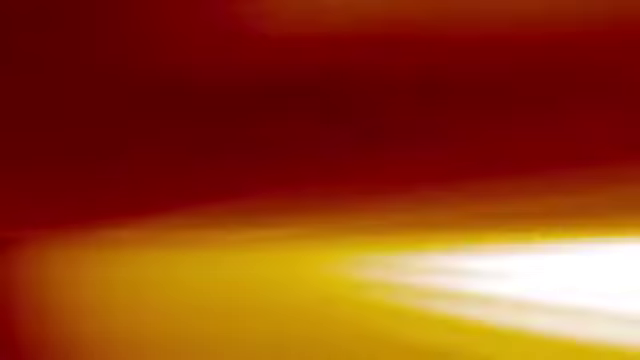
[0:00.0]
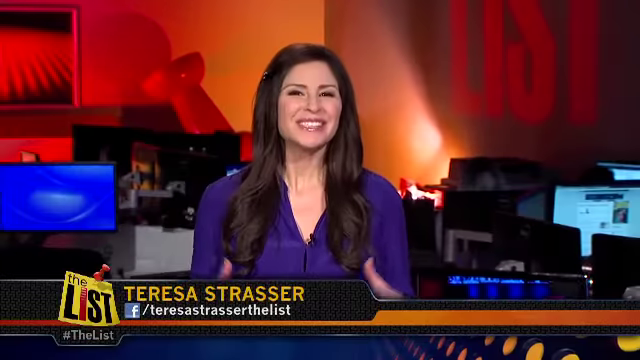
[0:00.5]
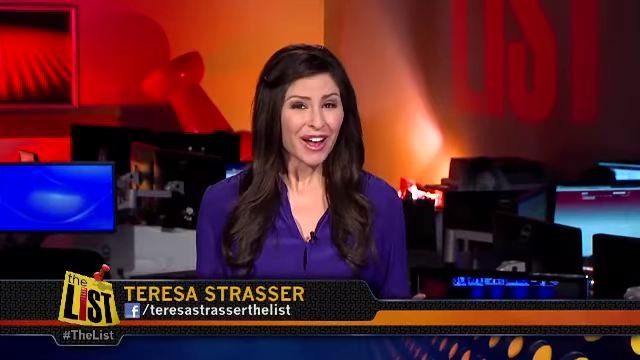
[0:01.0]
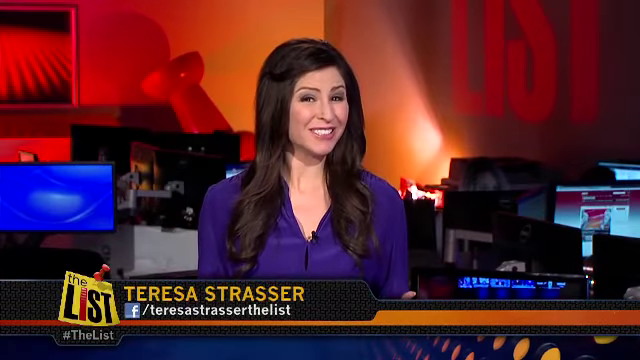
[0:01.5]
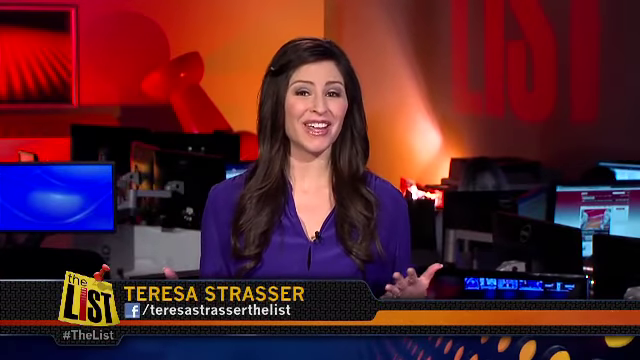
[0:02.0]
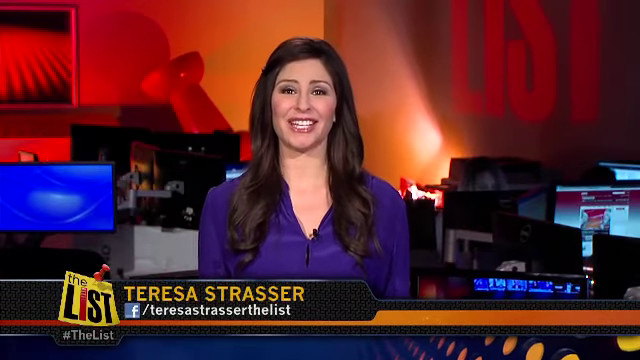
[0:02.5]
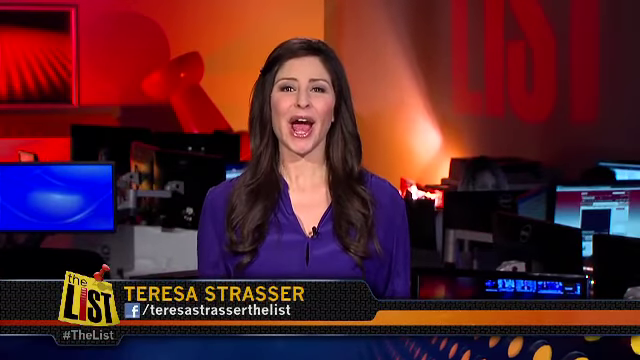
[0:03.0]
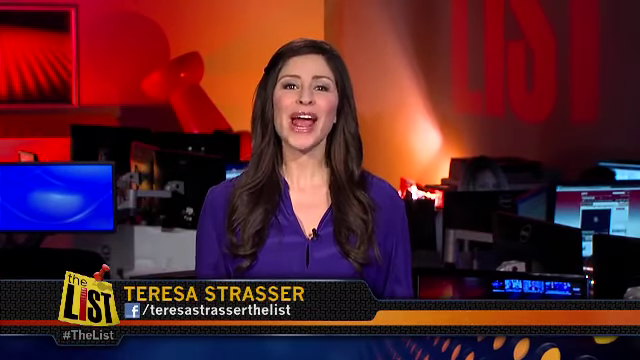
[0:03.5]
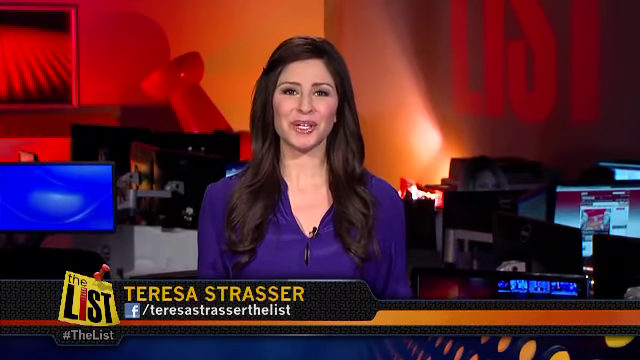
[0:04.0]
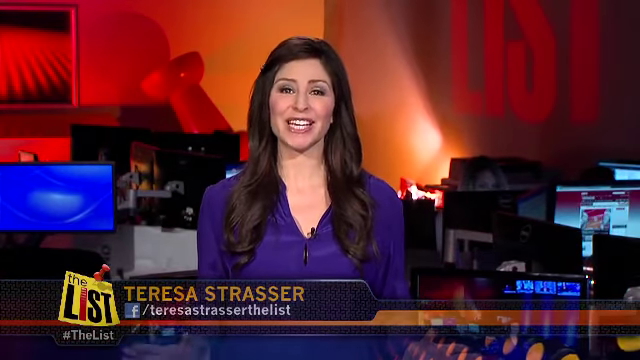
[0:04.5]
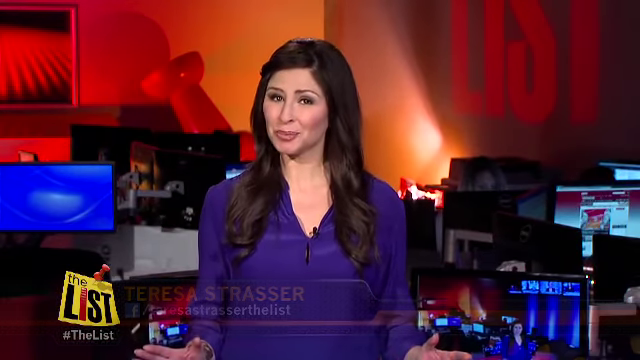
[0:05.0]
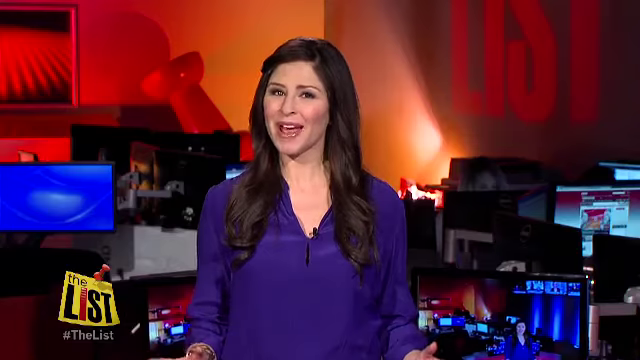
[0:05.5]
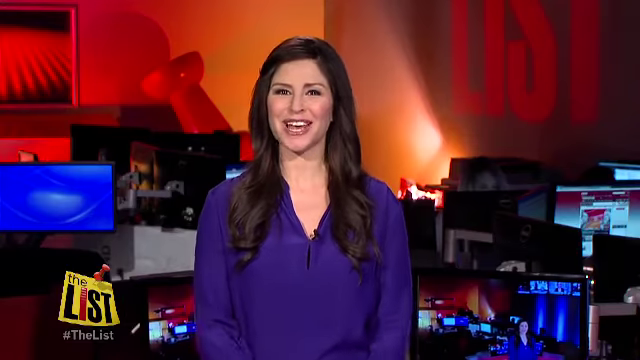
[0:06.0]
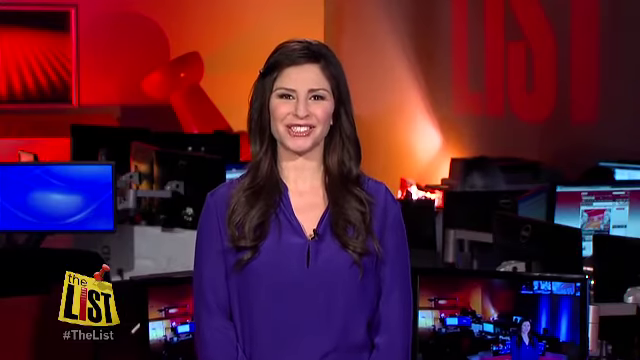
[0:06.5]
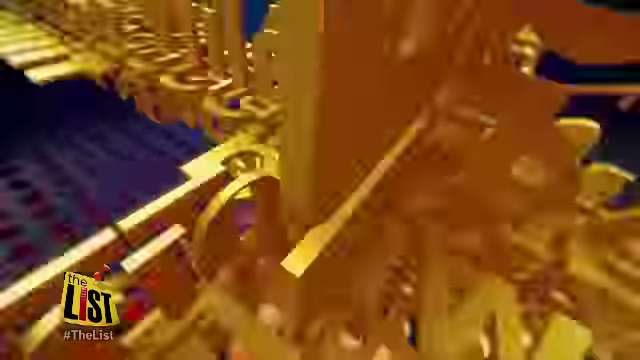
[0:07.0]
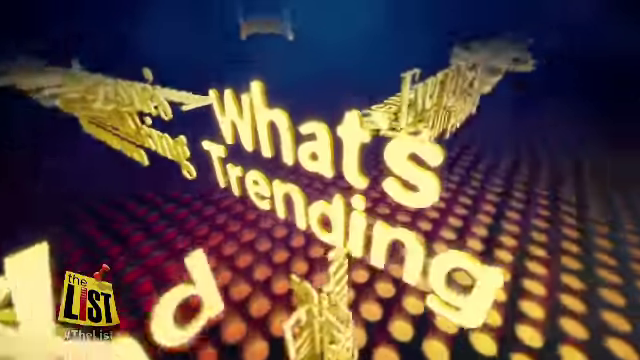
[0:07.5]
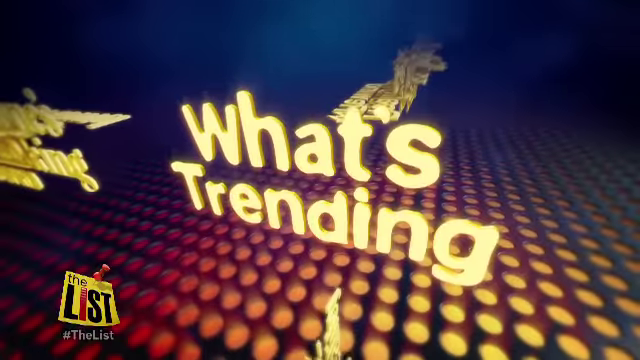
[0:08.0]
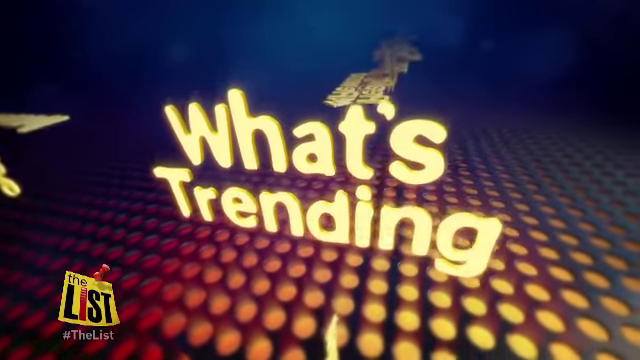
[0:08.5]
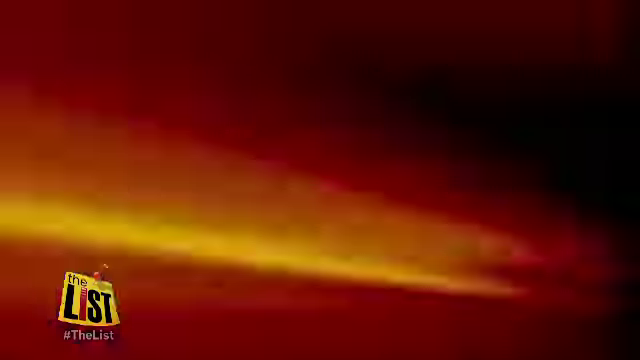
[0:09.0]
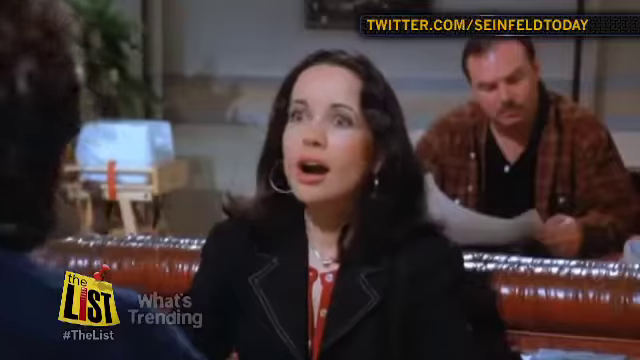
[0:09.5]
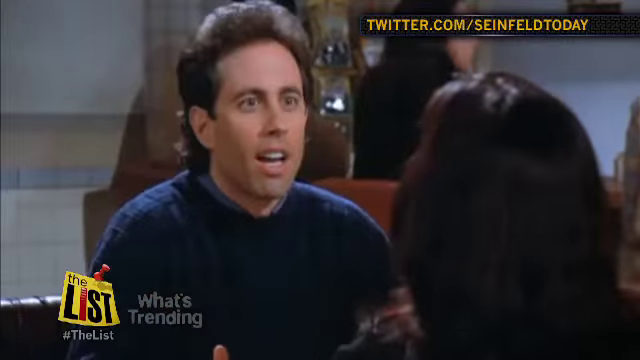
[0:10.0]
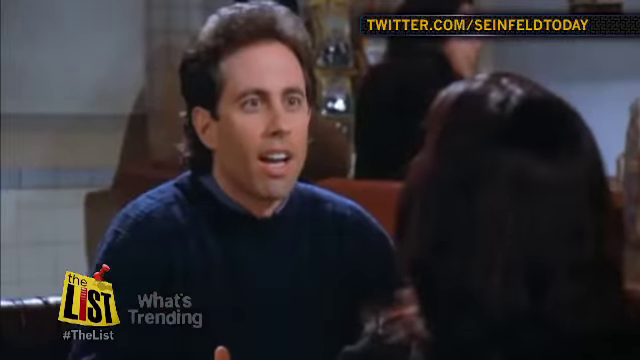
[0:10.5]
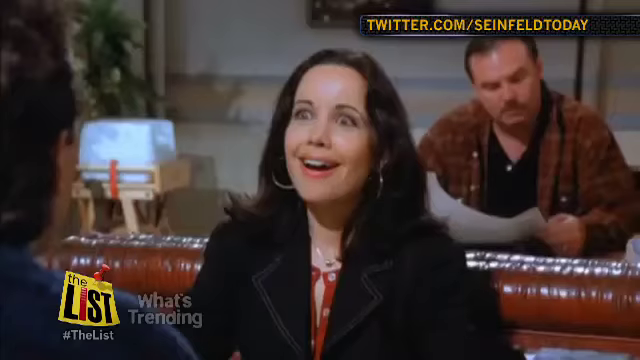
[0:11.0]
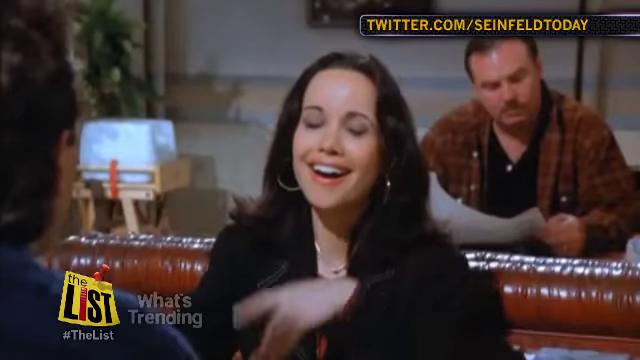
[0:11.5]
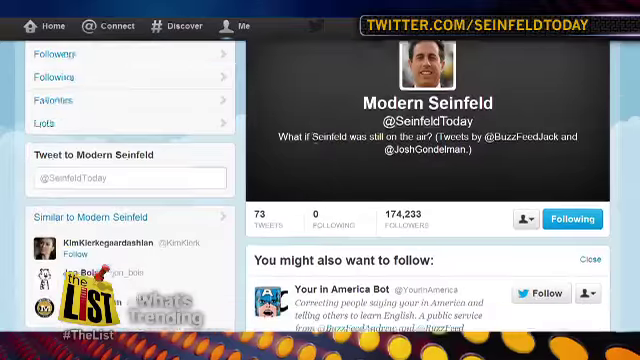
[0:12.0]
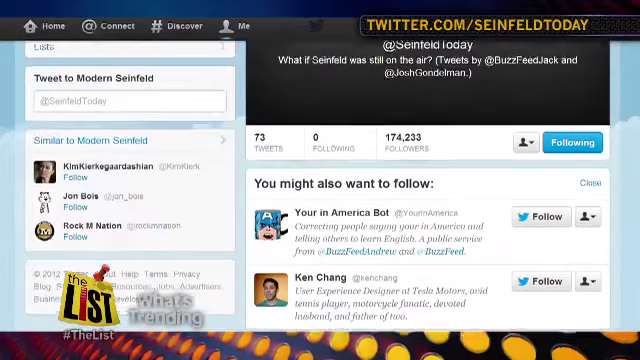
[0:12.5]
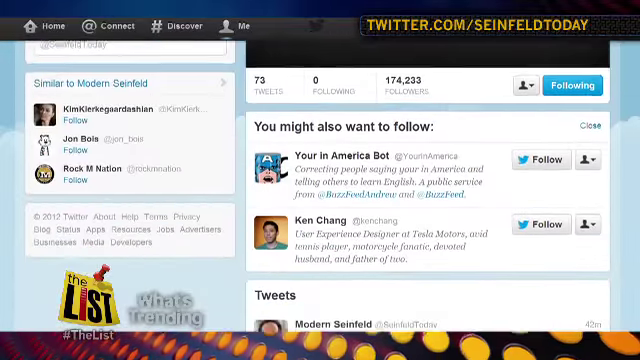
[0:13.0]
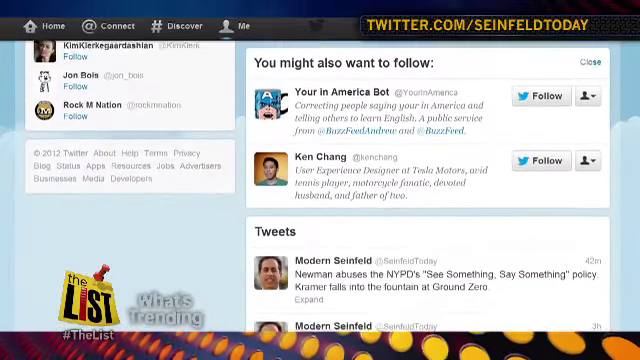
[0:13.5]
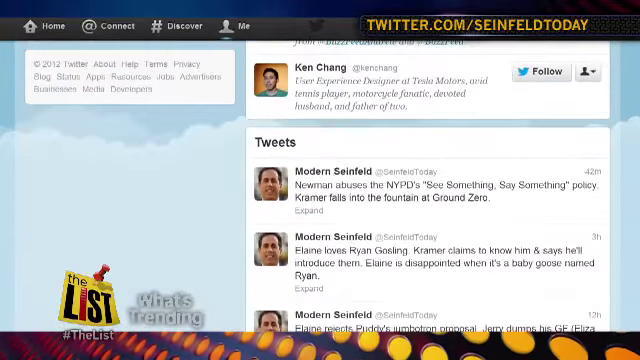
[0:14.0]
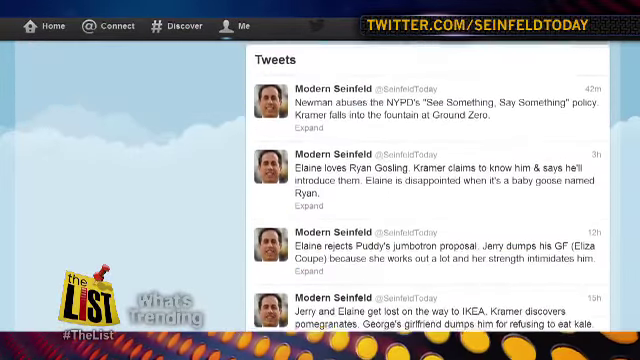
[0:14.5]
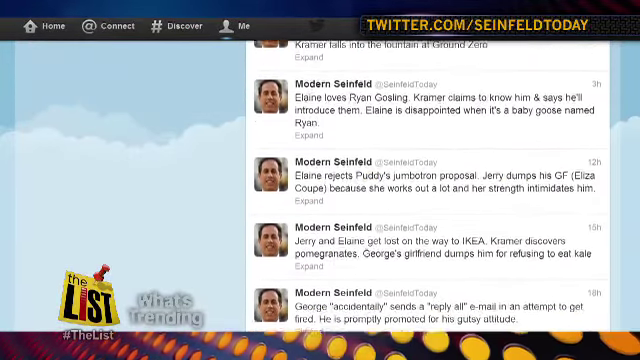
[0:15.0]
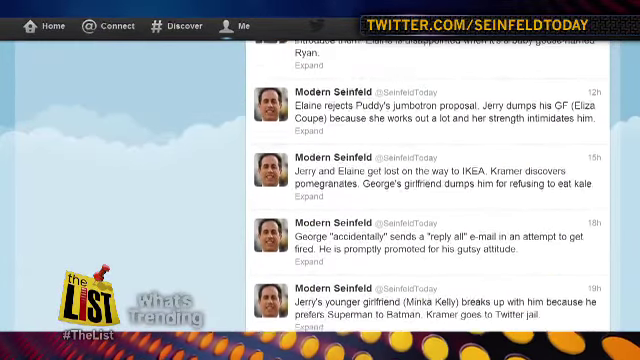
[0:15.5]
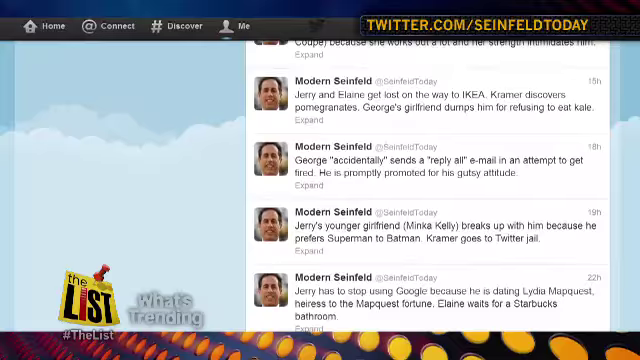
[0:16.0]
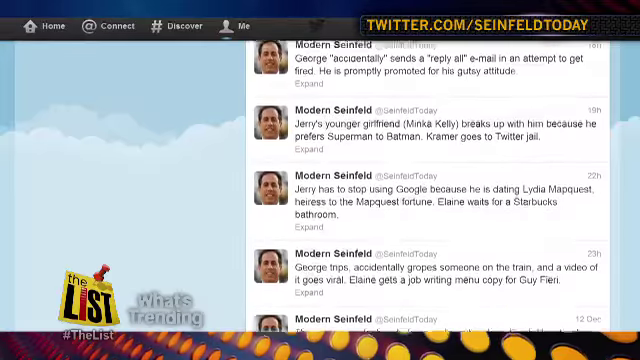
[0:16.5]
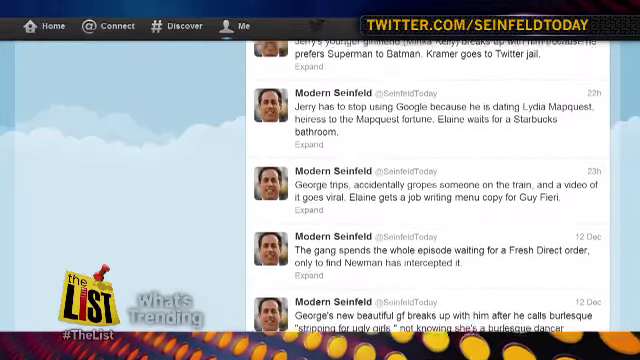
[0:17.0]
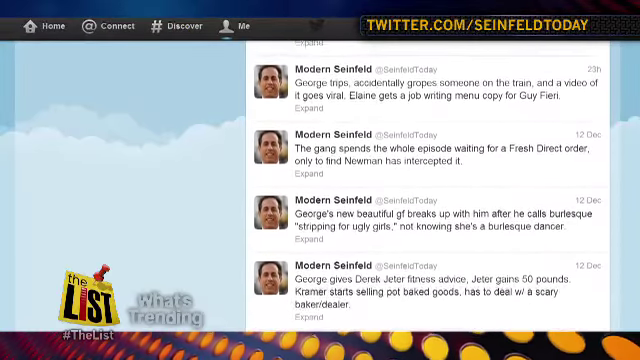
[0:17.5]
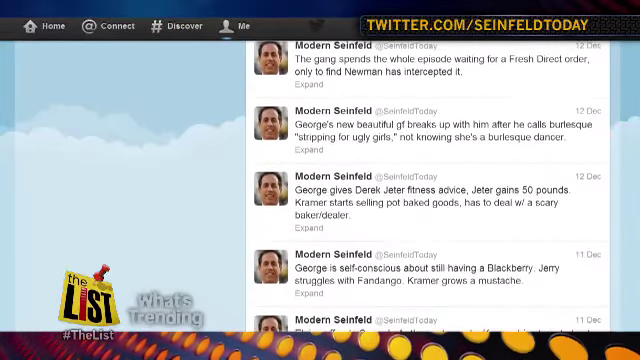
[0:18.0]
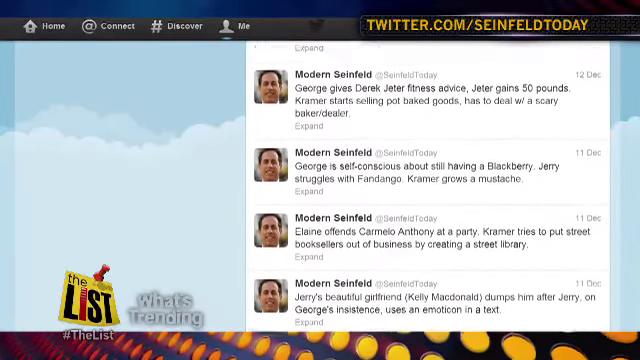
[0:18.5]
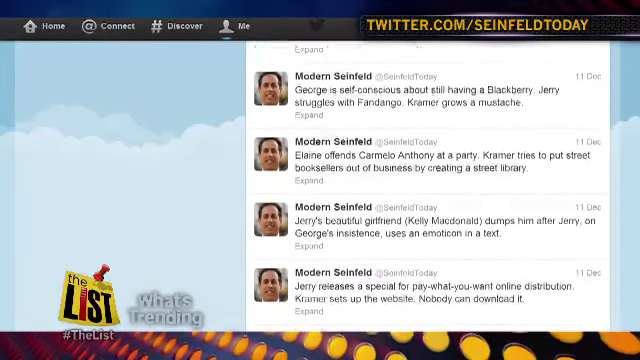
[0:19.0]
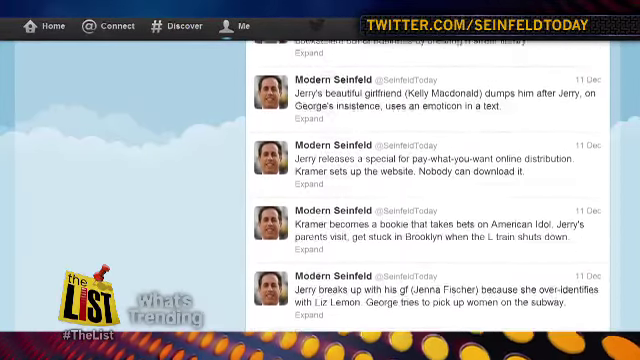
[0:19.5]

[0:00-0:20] A woman is in a studio; behind her is a TV showing a blue screen, and there appear to be many other computers behind her. As she reports, a list is shown. She seems fearful as she stares at what she sees. The video then goes to what's trending, followed by a movie that starts off with a carpool. Next, Twitter is being browsed; there appears to be a conversation going on, and it seems one person is posting over and over. The feed scrolls up very fast and then scrolls down.